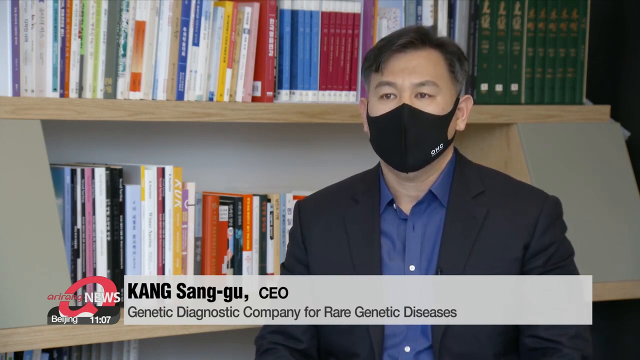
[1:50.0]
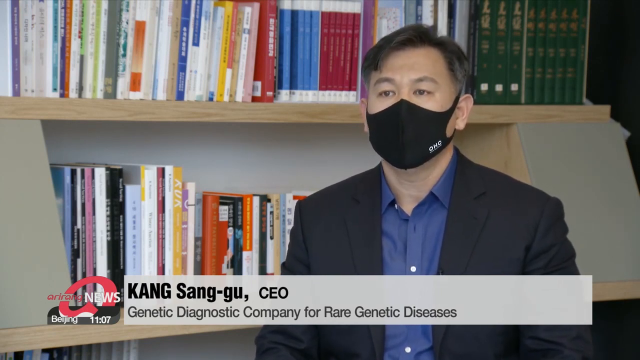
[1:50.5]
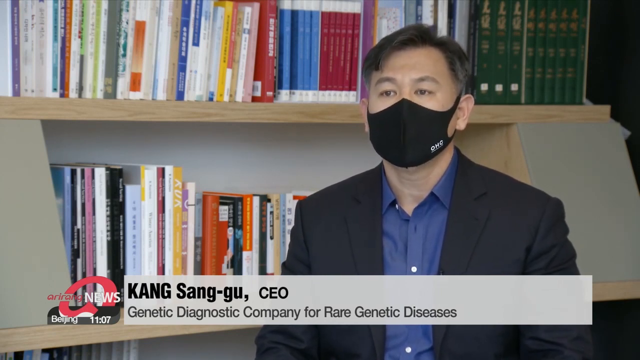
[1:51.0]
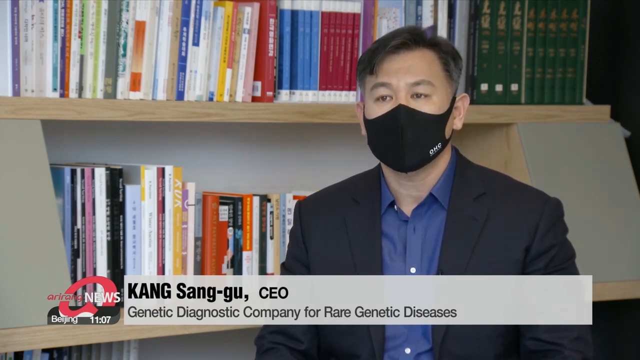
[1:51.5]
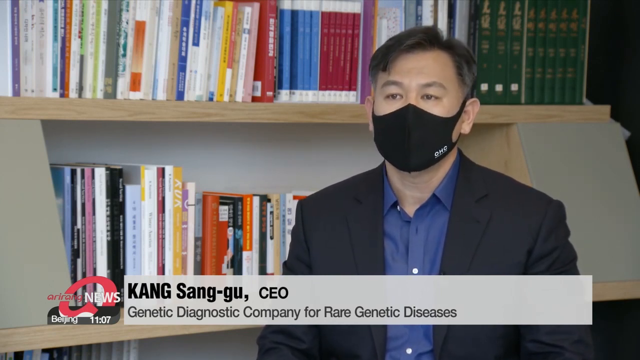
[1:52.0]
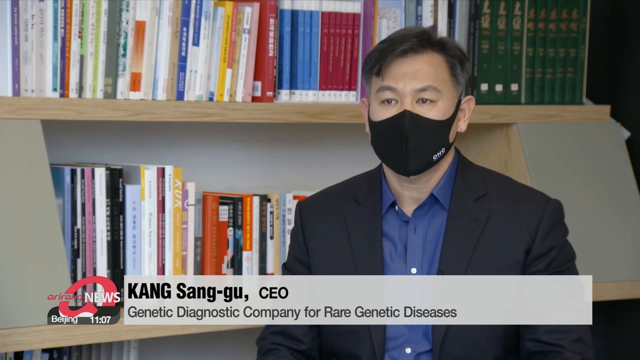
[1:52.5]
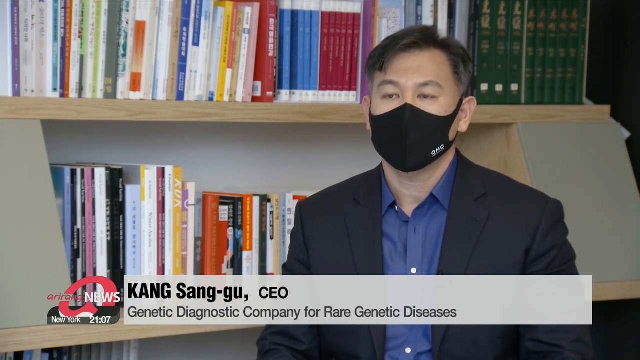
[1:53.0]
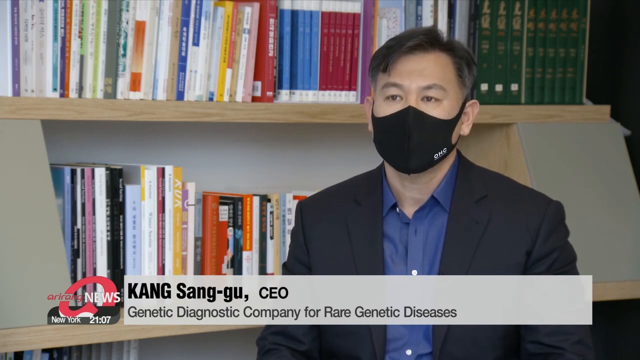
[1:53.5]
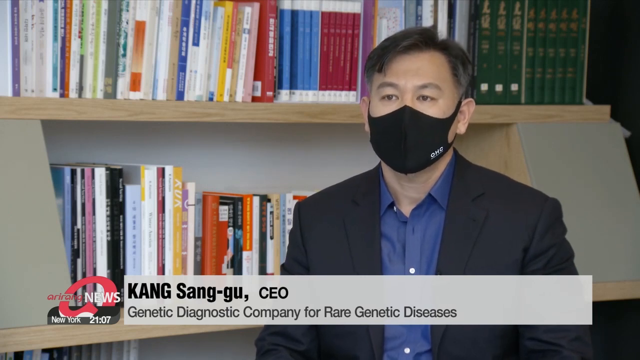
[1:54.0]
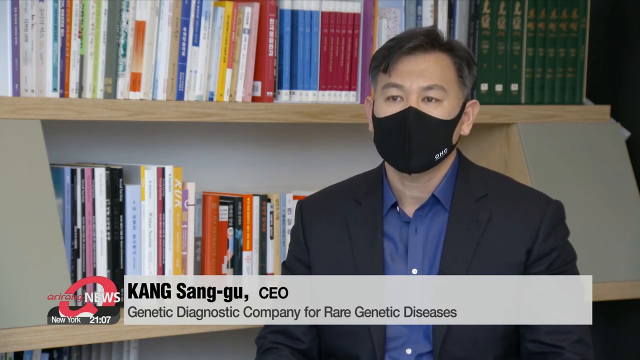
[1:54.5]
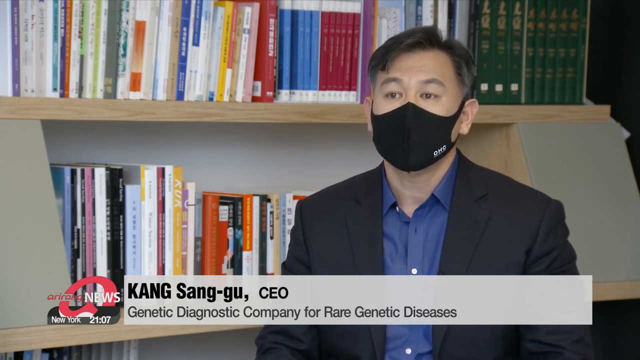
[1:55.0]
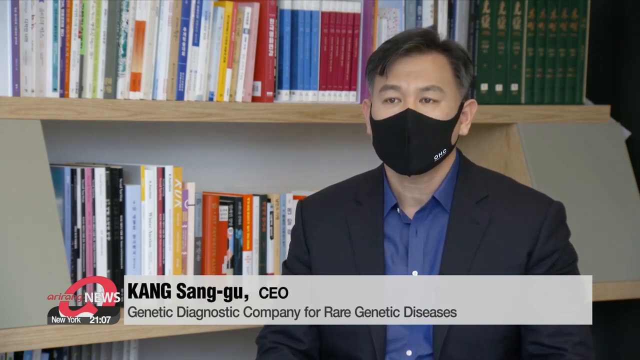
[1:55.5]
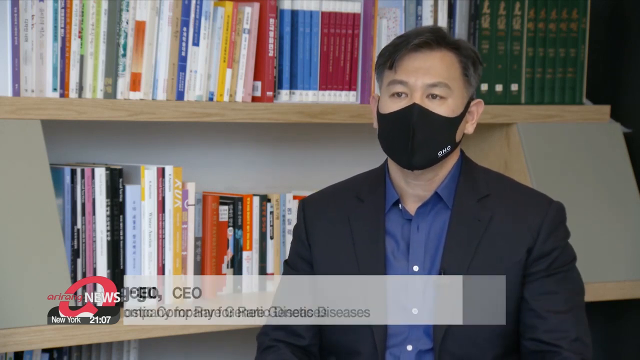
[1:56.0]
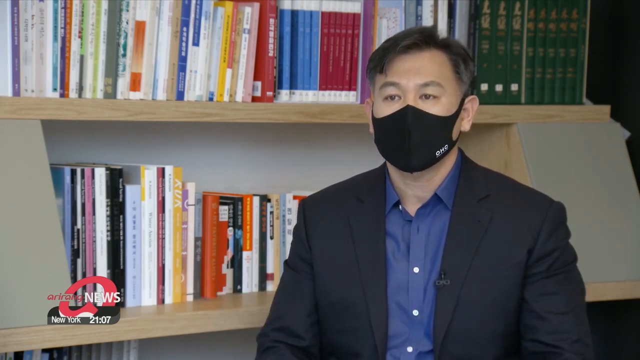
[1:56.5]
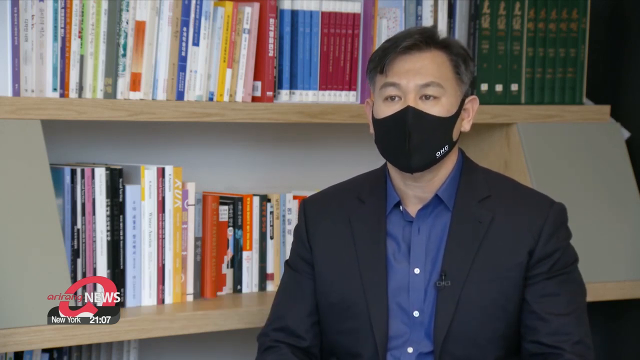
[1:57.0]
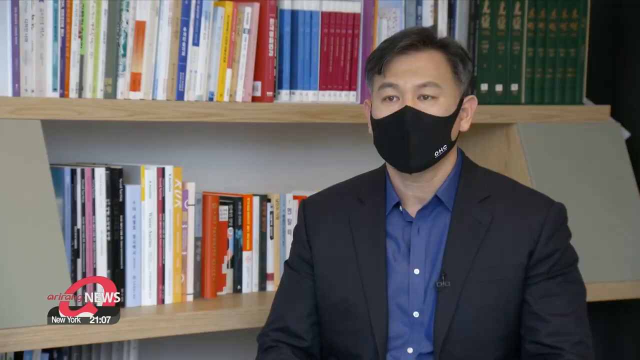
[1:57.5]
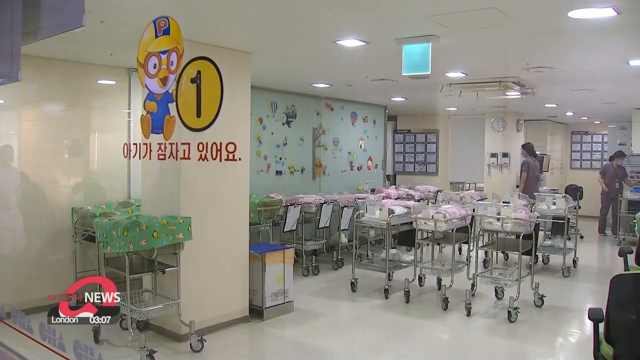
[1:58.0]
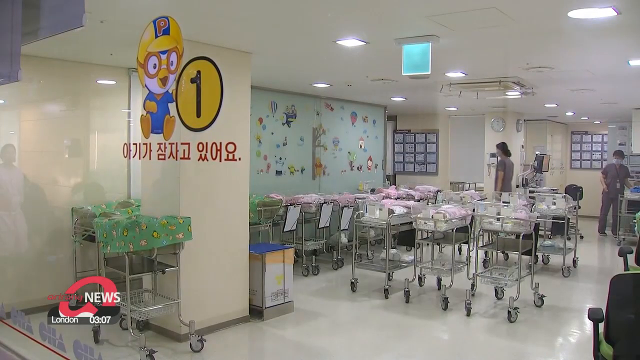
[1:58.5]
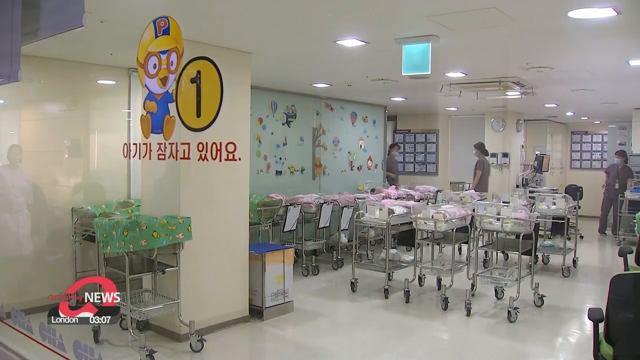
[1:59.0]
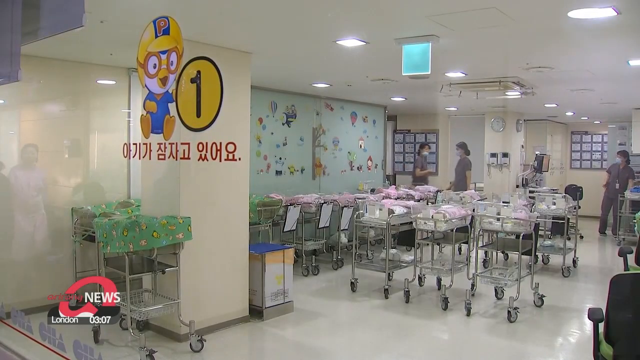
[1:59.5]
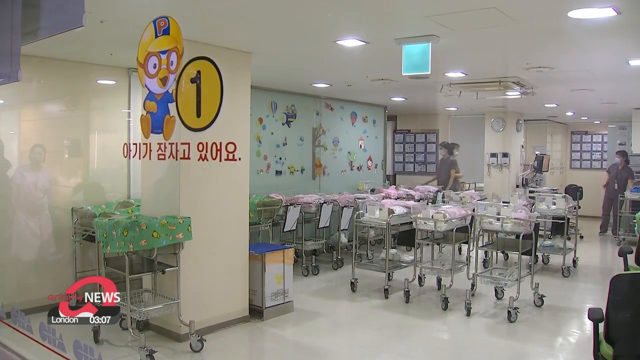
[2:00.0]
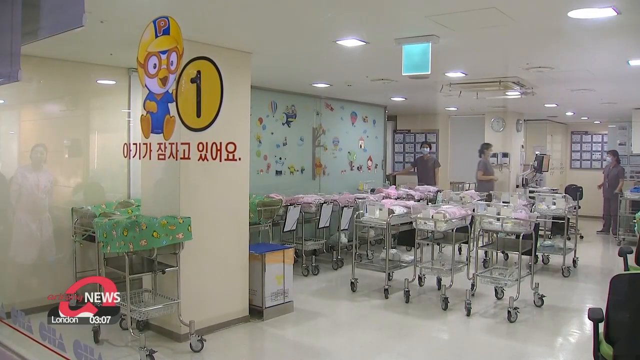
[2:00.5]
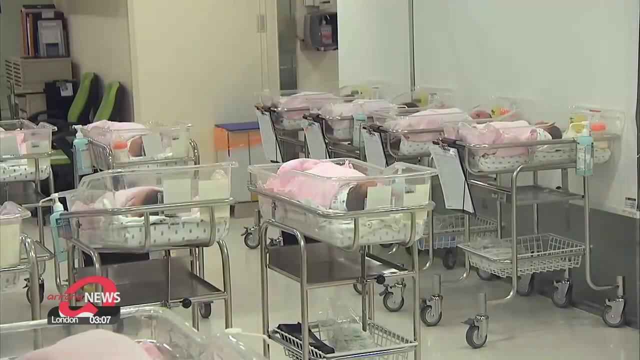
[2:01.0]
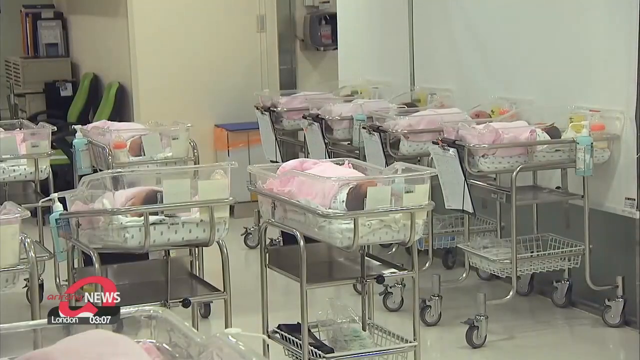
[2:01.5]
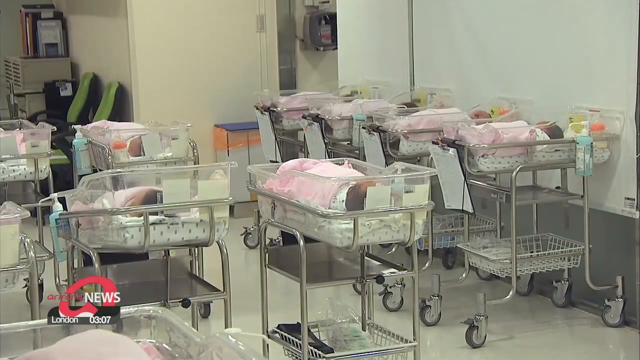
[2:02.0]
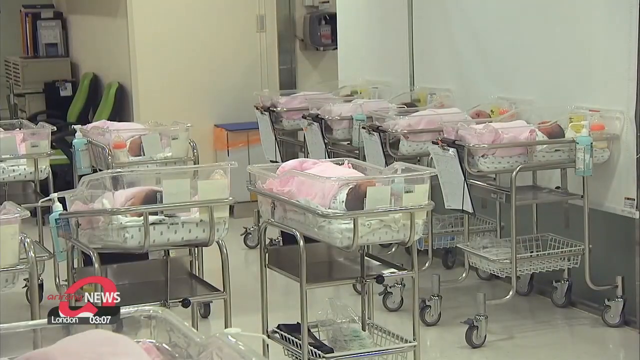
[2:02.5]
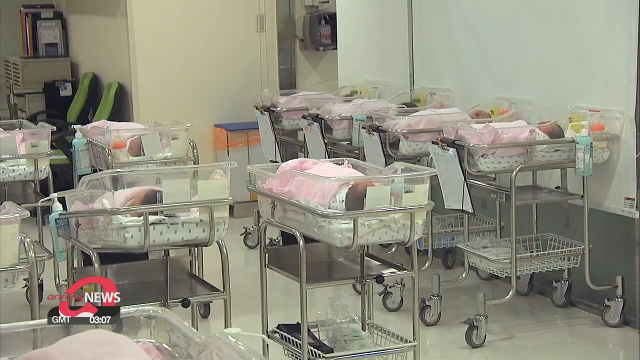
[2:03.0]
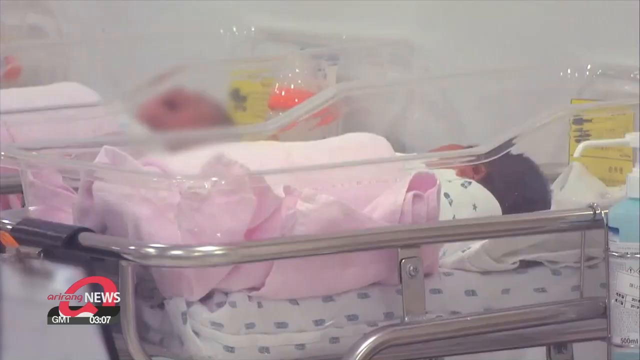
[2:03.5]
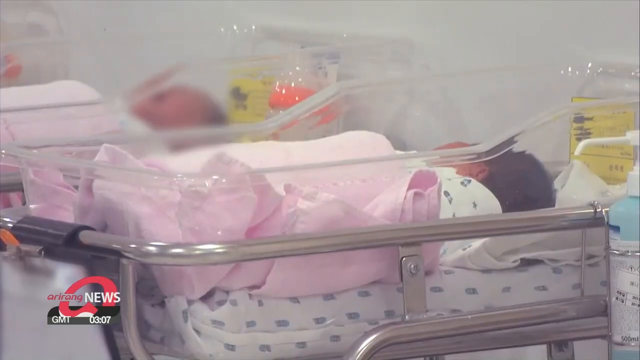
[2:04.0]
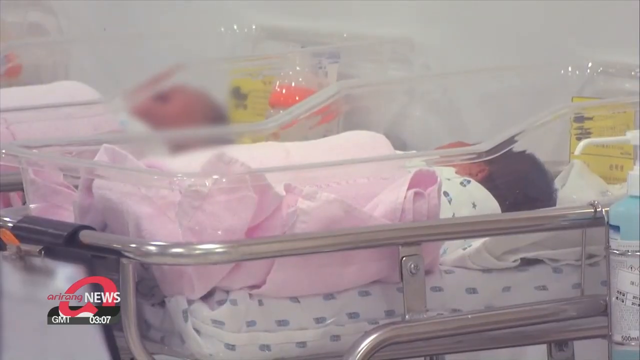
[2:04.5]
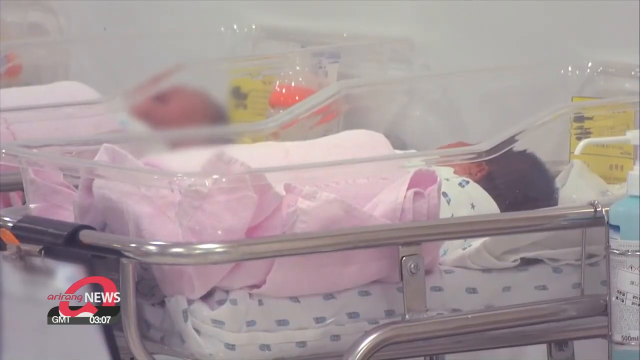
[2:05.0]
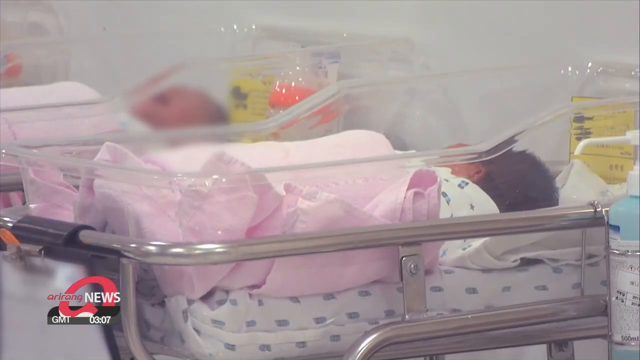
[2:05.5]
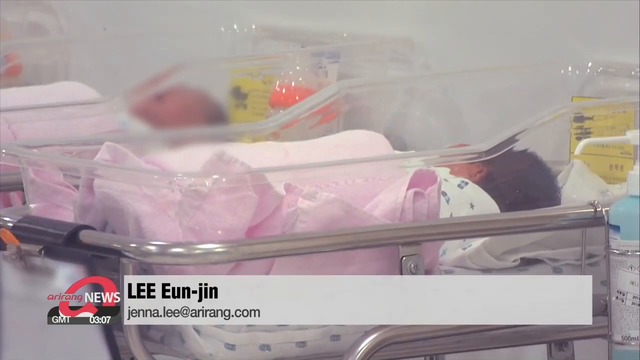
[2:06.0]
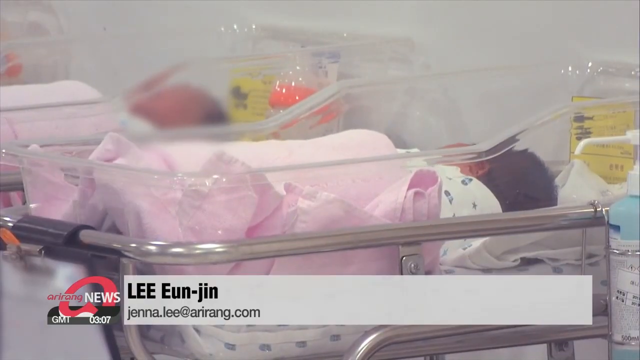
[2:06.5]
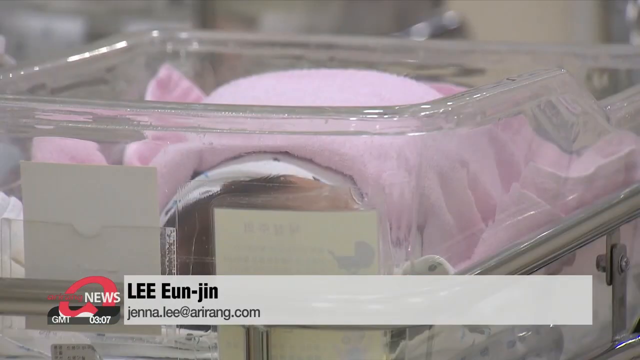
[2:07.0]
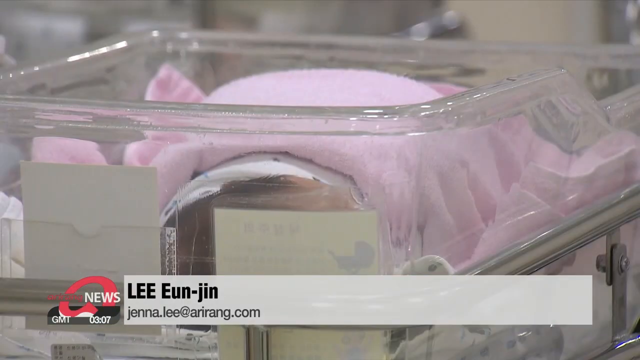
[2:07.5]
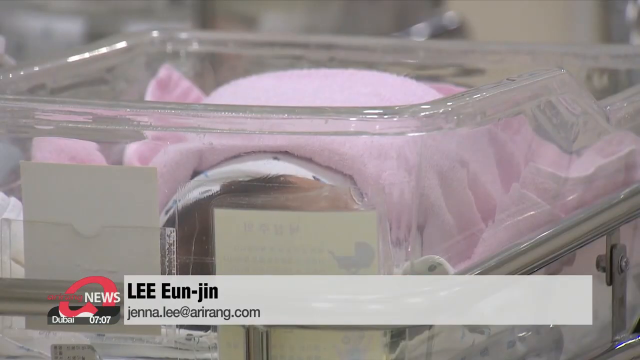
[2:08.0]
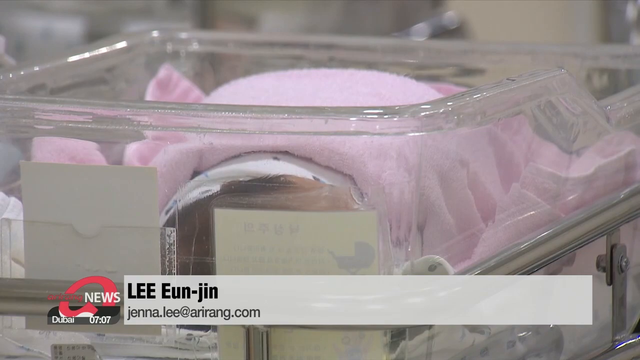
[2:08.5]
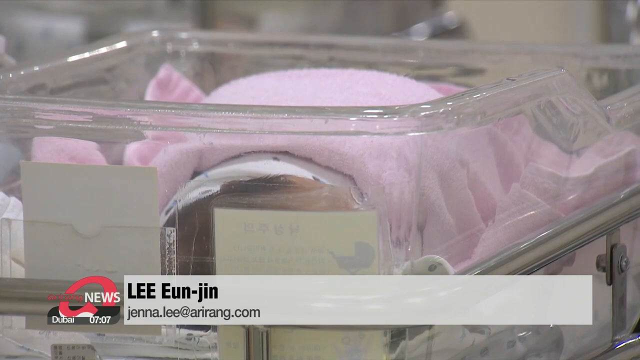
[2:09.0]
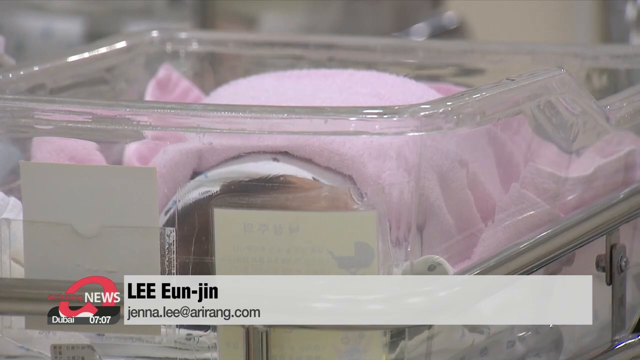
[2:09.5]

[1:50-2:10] As he talks, Kang somewhat lifts his eyes and nods his head several times. The video cuts to a big hospital room with about a dozen infants in incubators. These babies are not connected to anything and have no tubes attached; the room looks almost like a waiting room for them. The very tiny babies are all in plastic bins set on trays with rollers below, and all are wrapped in pink blankets. Each bin has what appears to be an IV or something with a yellow label, along with some type of carton container next to it. A crawler then shows what appears to be a reporter's name, "Lee Eun Jin," followed by "Jenna.lee@arirang.com"; she is apparently the reporter or the contact for the story. Various close-ups show the newborns sleeping.